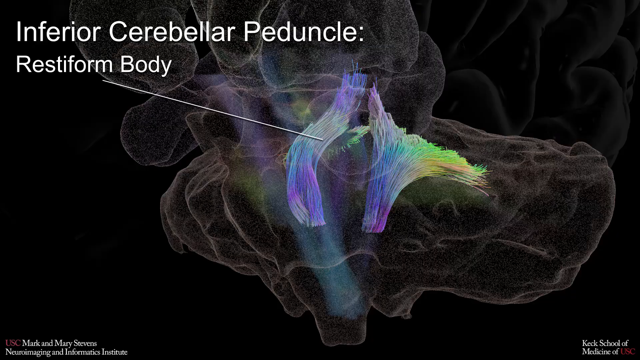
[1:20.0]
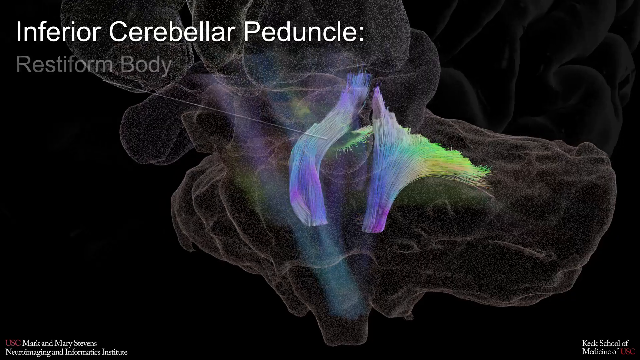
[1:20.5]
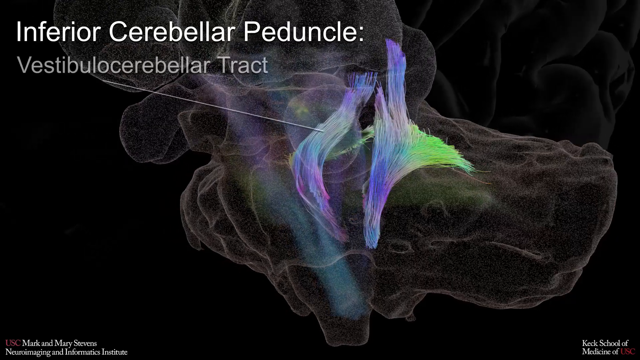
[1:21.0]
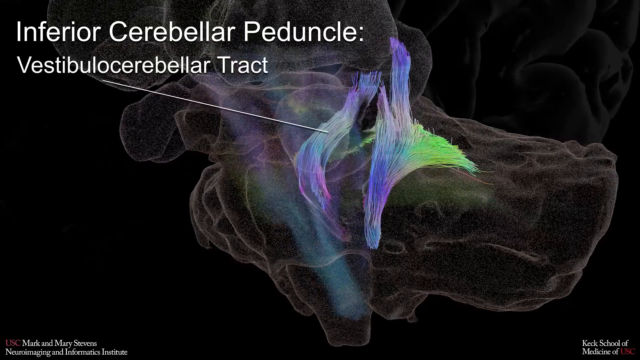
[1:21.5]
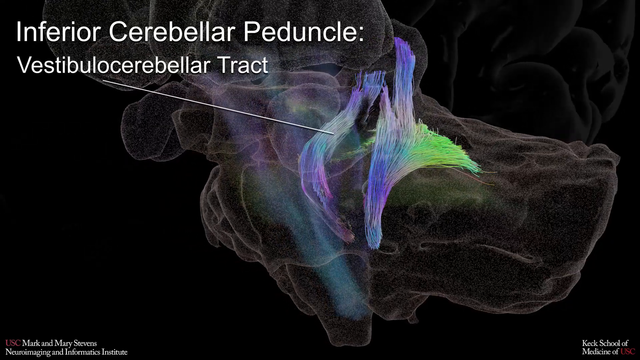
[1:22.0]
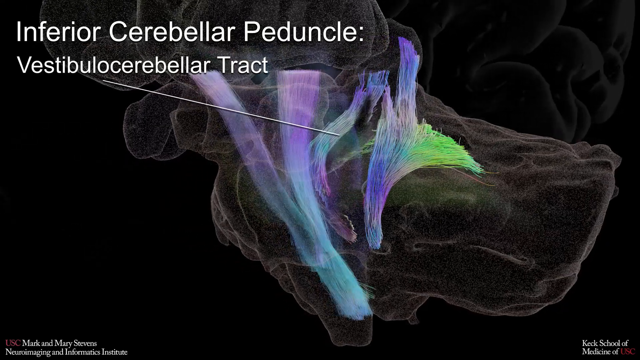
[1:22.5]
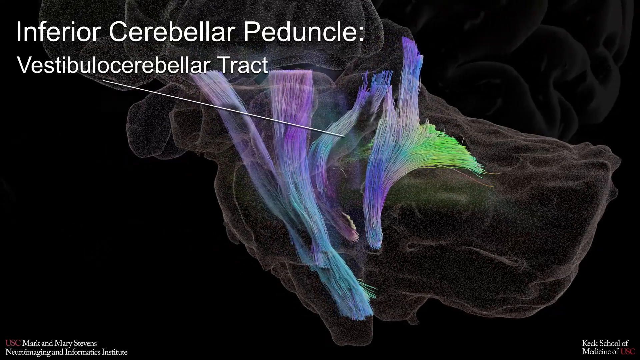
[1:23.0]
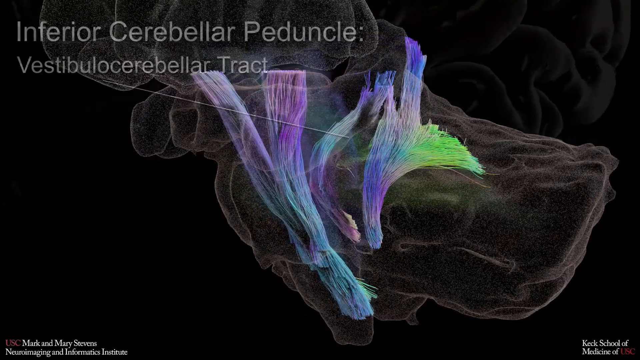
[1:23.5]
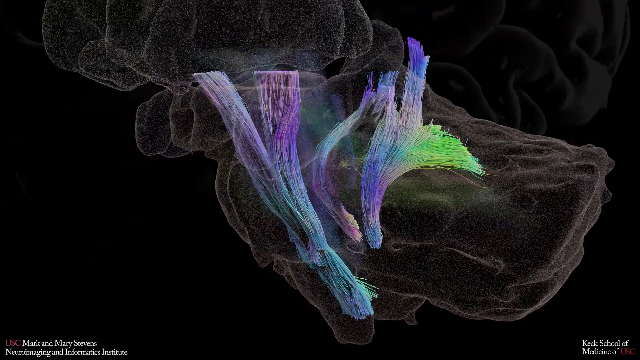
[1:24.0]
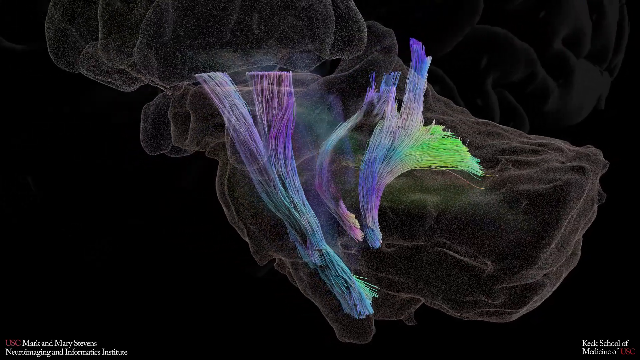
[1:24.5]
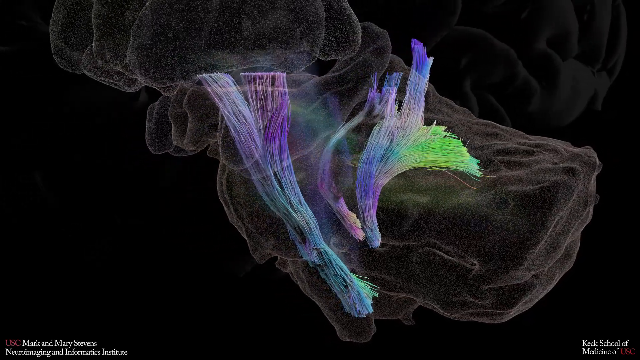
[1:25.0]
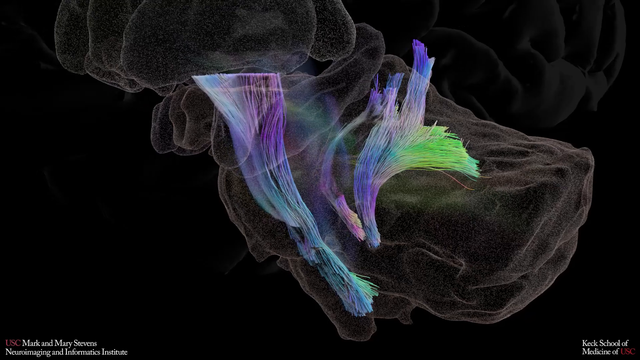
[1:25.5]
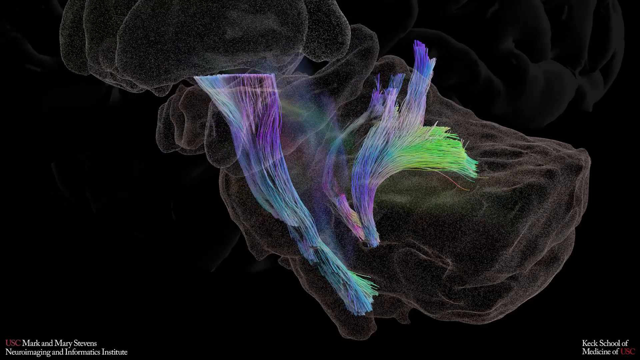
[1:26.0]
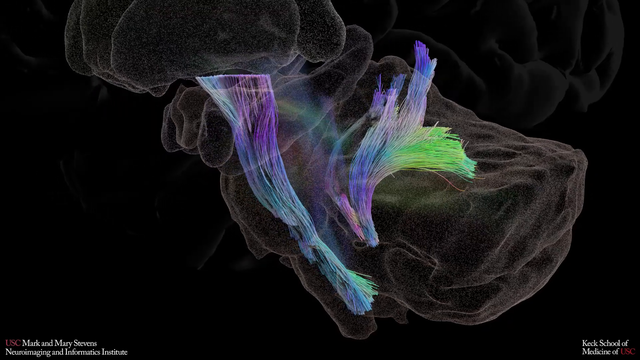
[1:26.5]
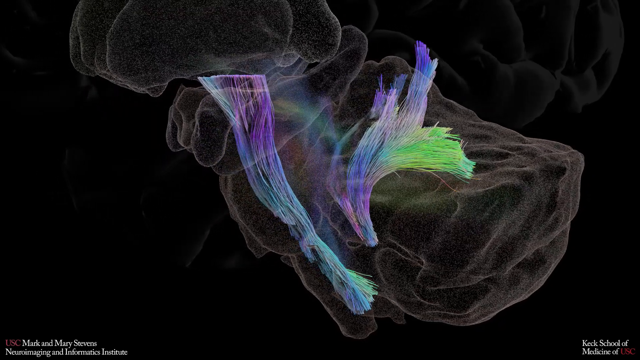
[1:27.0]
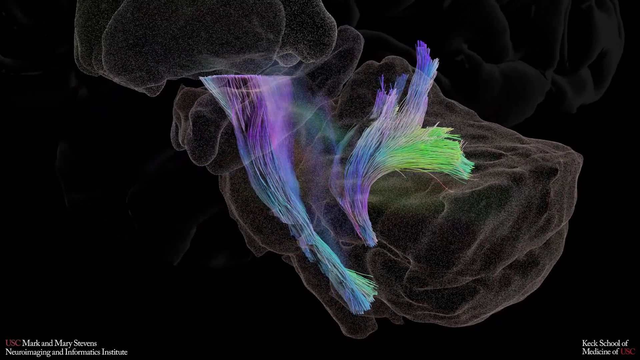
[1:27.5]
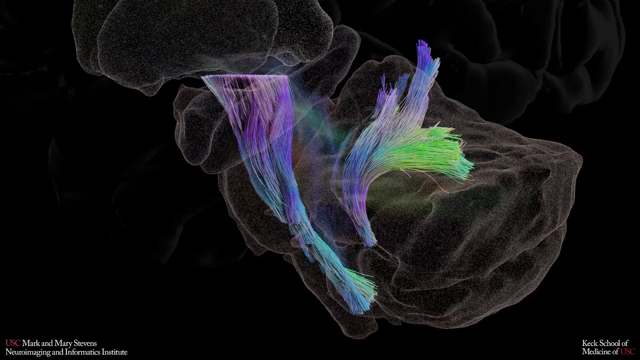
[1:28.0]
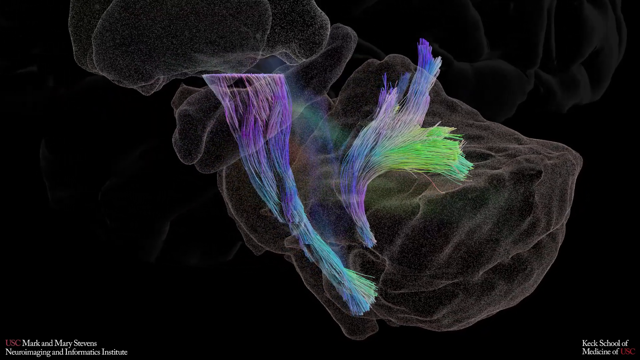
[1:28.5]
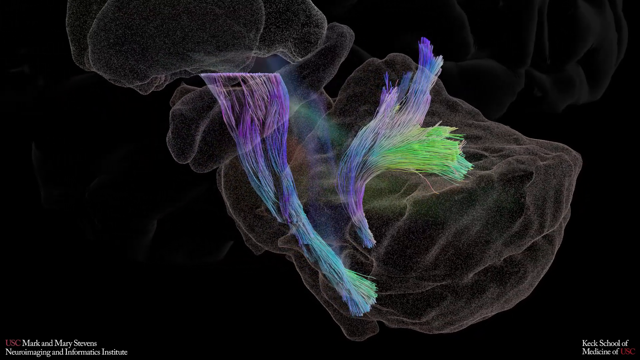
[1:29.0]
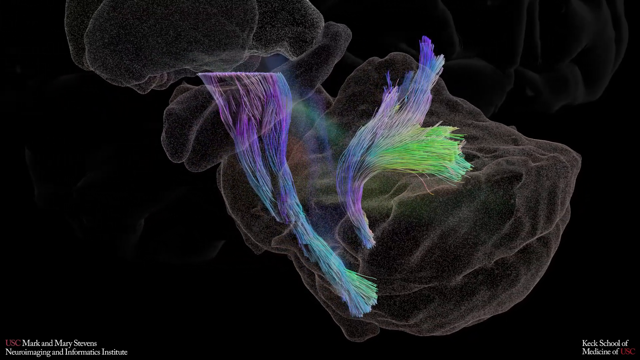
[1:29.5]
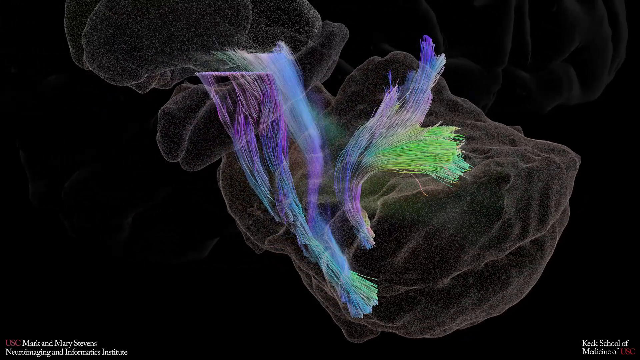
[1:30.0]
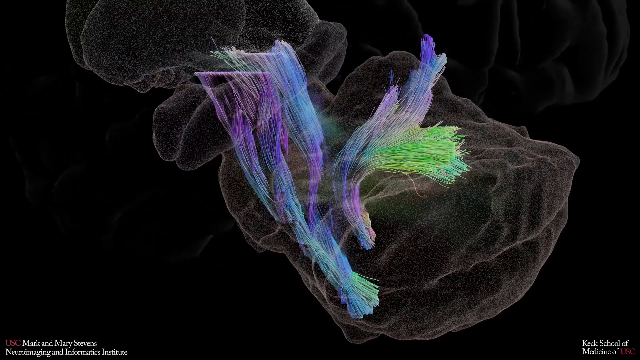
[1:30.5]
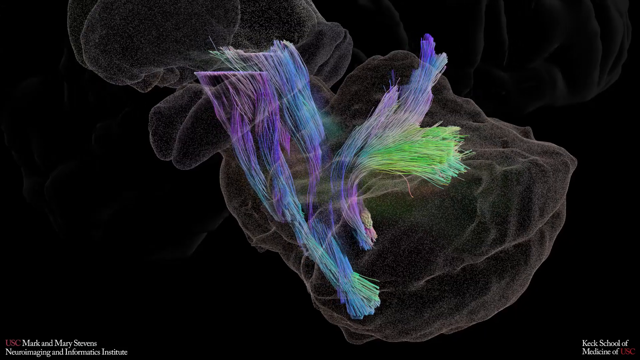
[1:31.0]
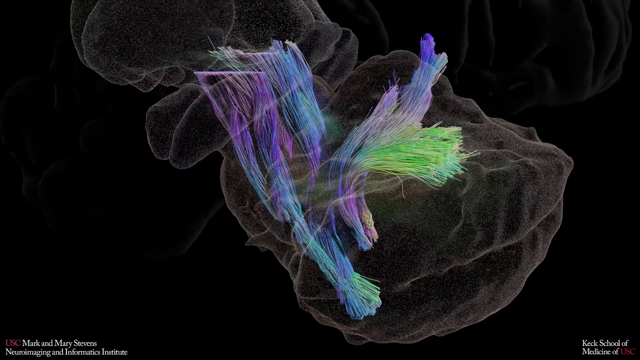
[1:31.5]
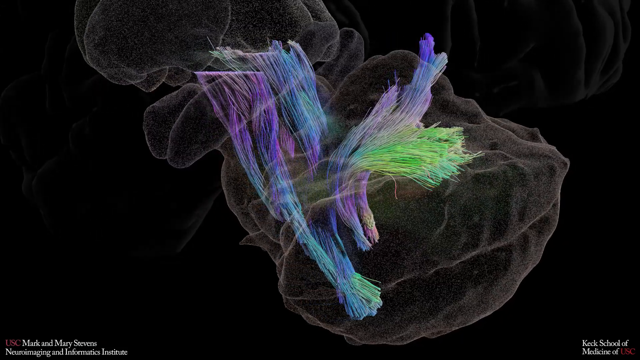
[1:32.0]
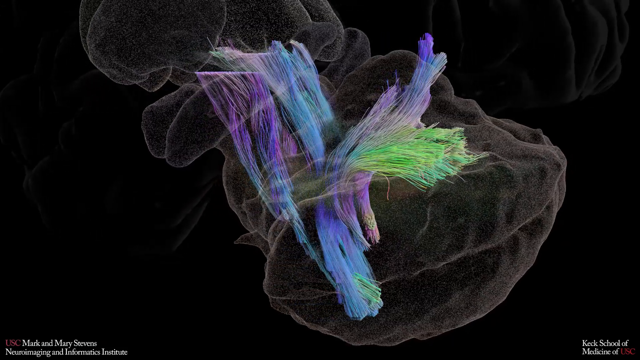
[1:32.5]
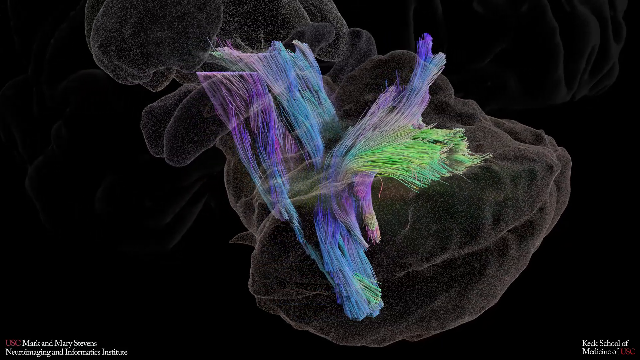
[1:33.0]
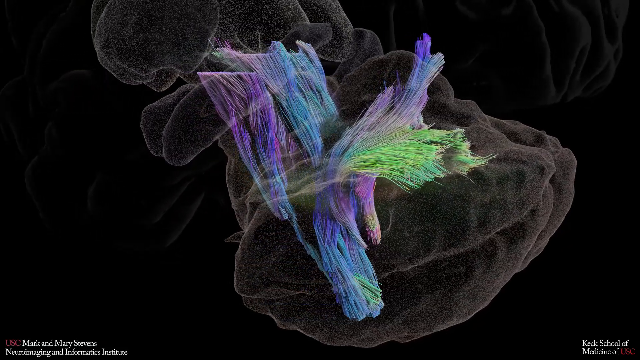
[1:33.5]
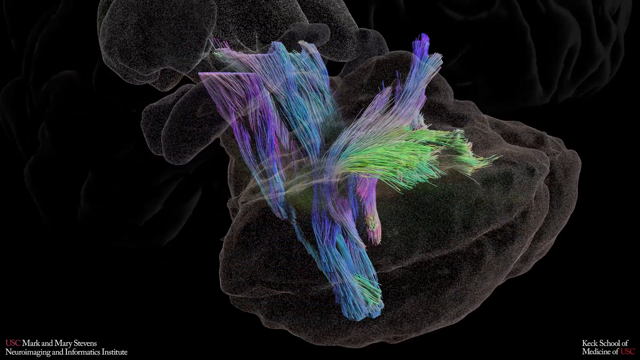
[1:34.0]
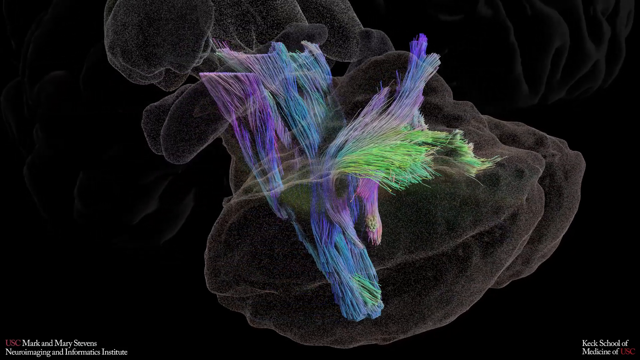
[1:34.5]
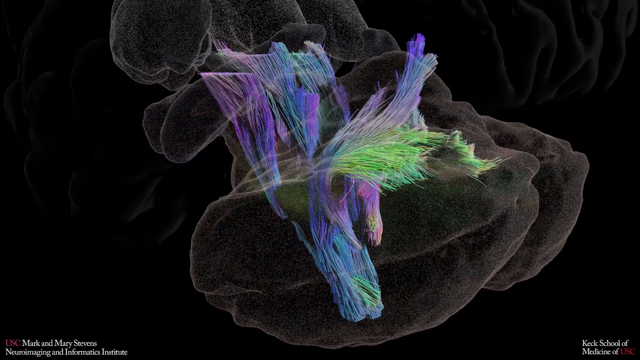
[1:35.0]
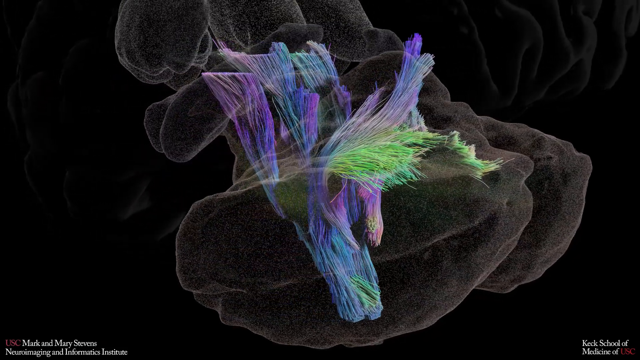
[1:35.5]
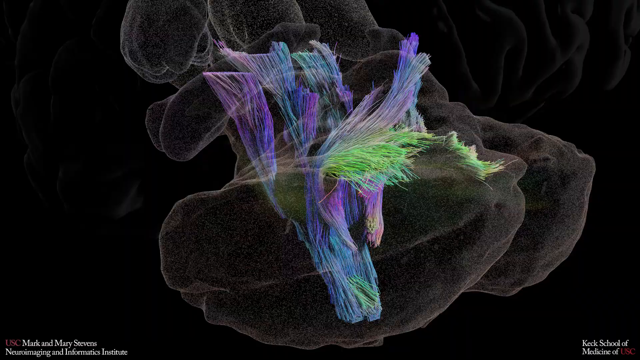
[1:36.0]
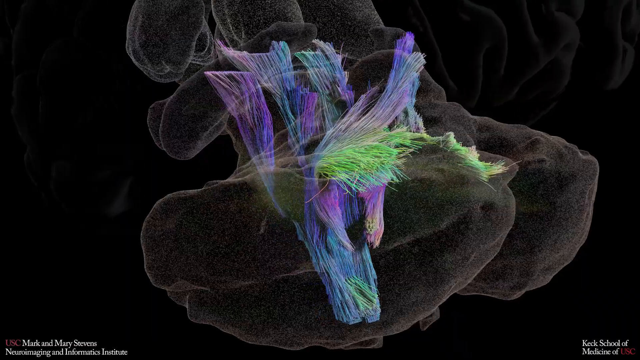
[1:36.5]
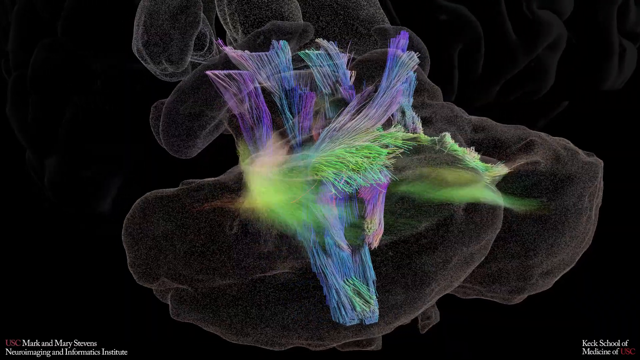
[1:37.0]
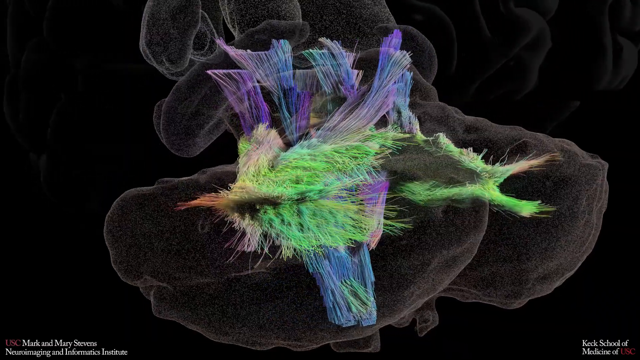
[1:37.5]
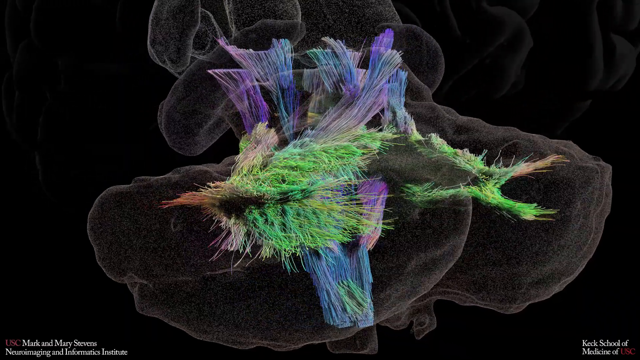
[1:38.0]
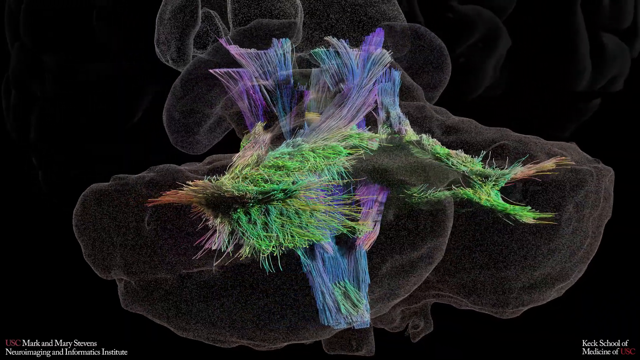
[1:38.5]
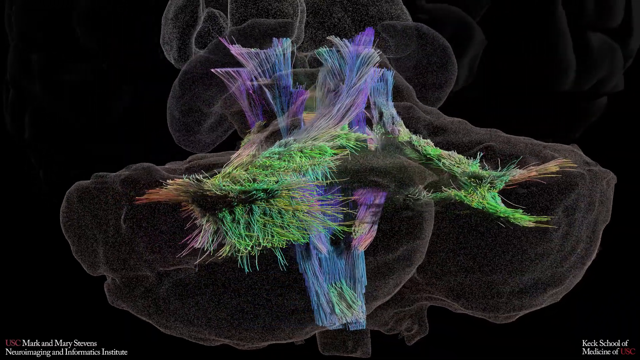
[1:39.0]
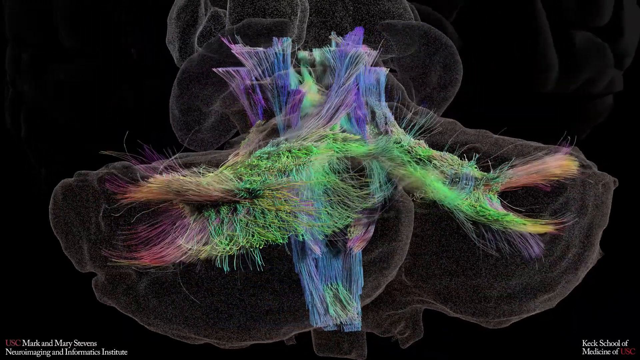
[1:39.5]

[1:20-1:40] White text at the top reads "inferior cerebellar peduncle restiform body." A gray part of a brain is visible with darker brain matter in the background, along with kind of purple, blue, green and yellow stems that kind of look like fibers. The text changes as the fibers change, and text reading "vestibular cerebellar tract" appears while the camera moves. Another part pops up on the screen next to it and gradually gets thicker and larger, filling up more of the brain. A large chunk of green hairs then pops up. The brain has a somewhat grainy texture. Text at the bottom of the screen reads "Mark and Mary Stevens," and the name of a school at the bottom reads "Keck School of Medicine of UMC."